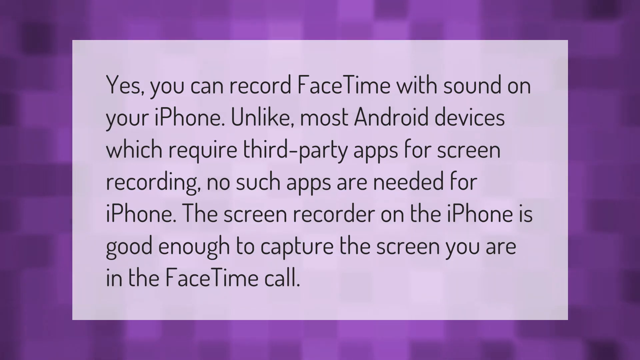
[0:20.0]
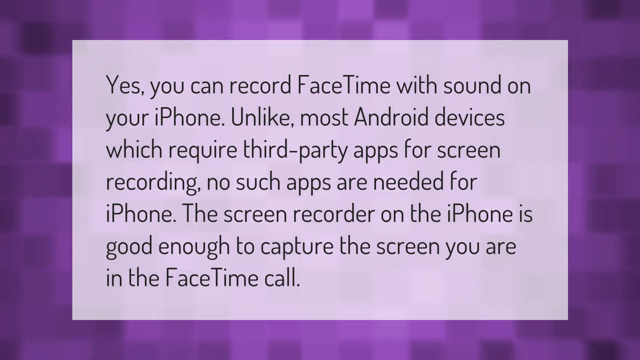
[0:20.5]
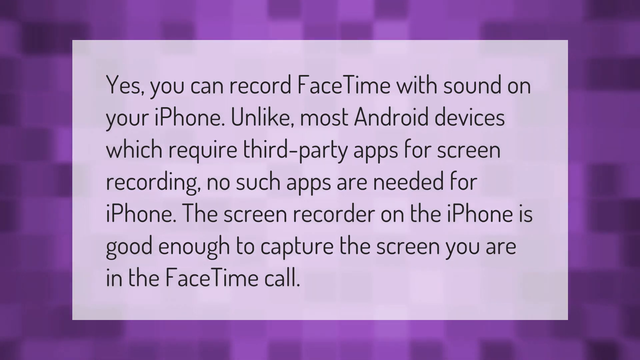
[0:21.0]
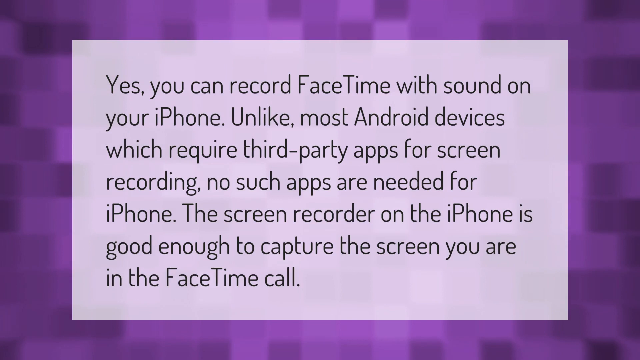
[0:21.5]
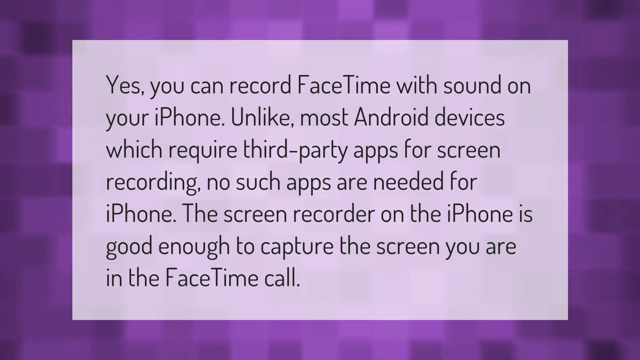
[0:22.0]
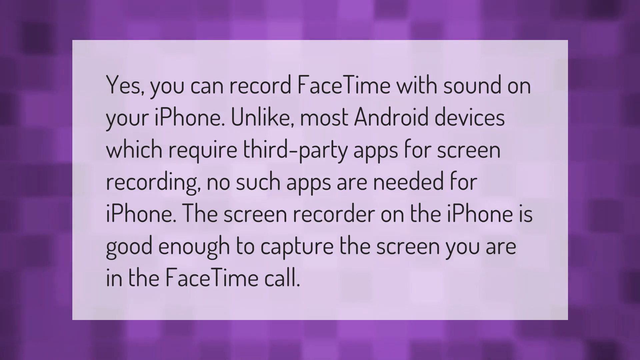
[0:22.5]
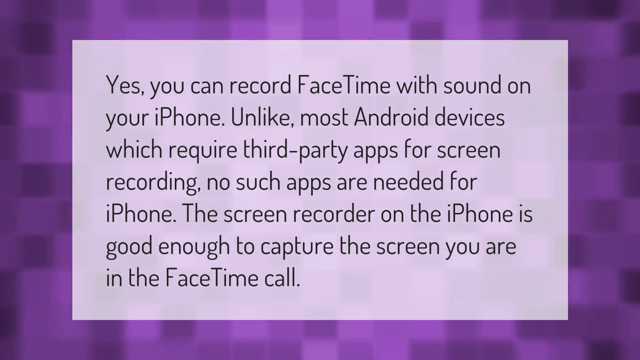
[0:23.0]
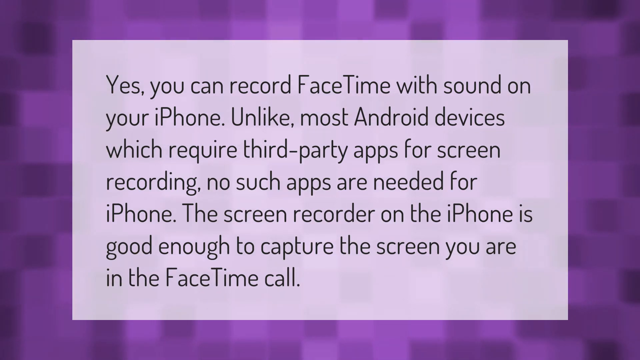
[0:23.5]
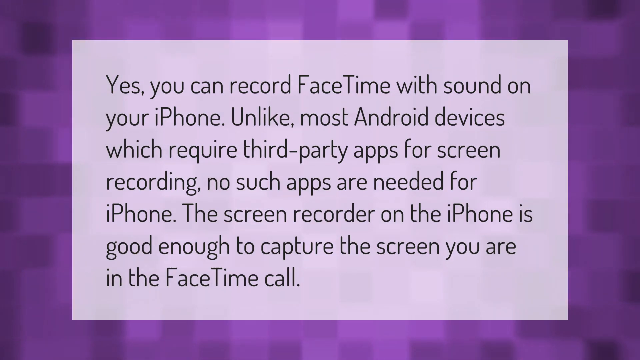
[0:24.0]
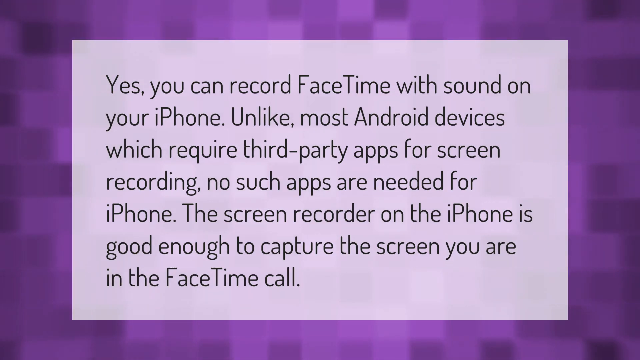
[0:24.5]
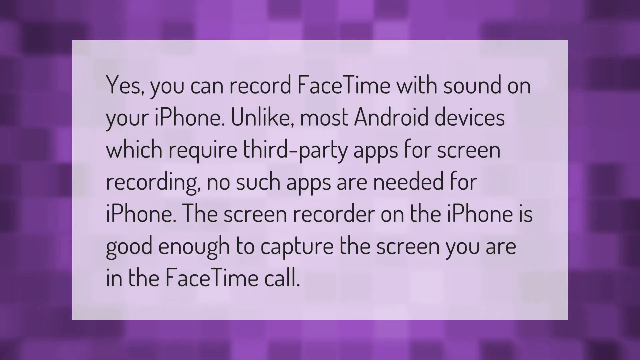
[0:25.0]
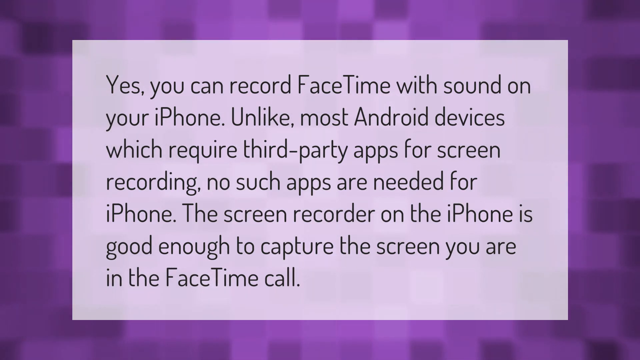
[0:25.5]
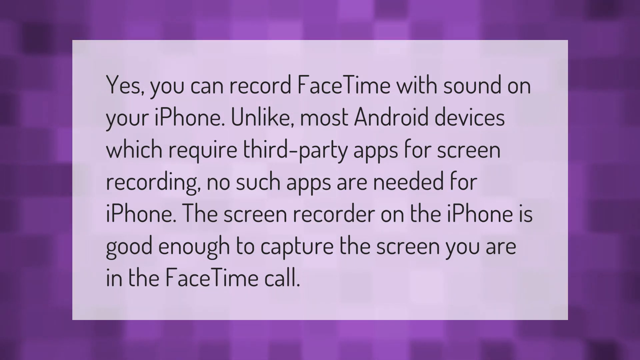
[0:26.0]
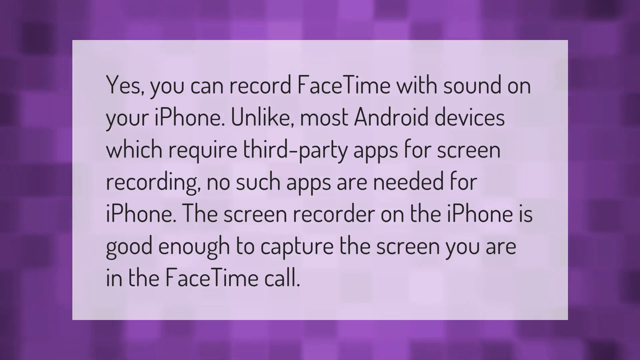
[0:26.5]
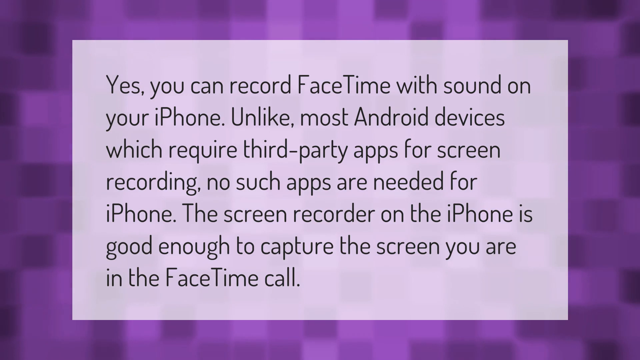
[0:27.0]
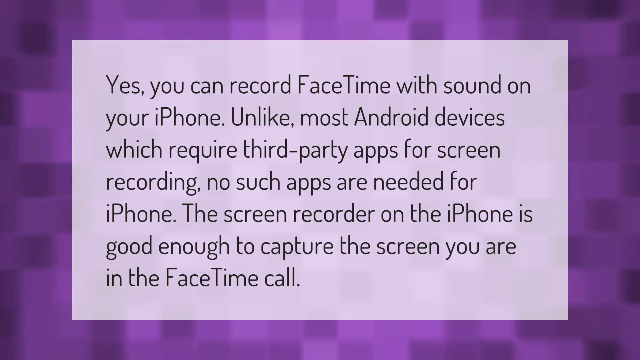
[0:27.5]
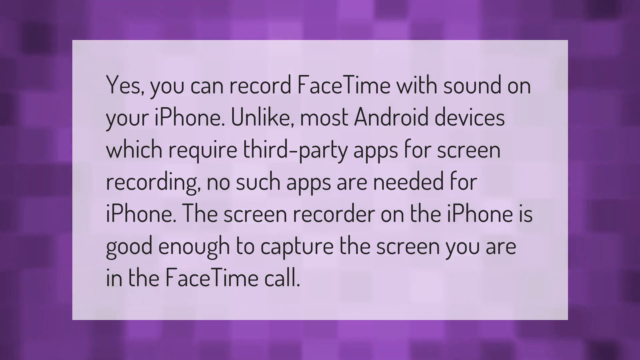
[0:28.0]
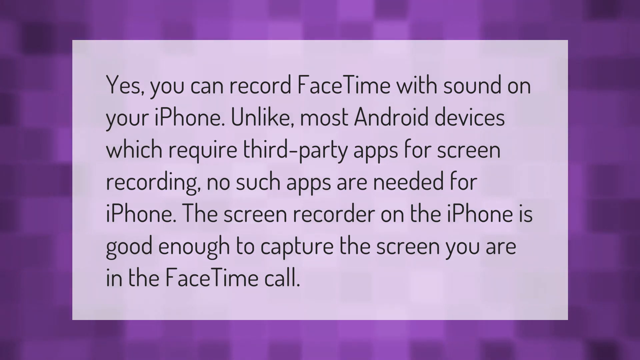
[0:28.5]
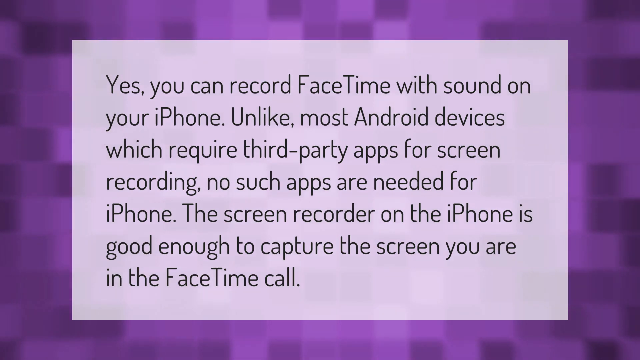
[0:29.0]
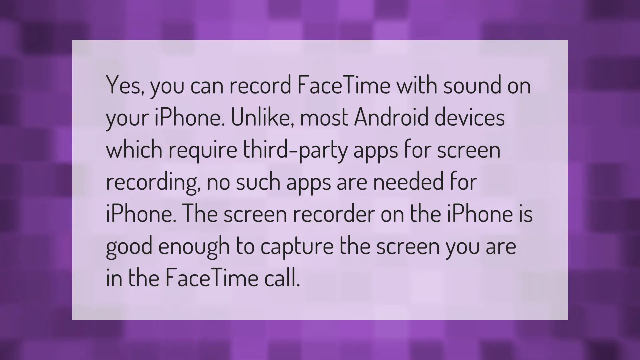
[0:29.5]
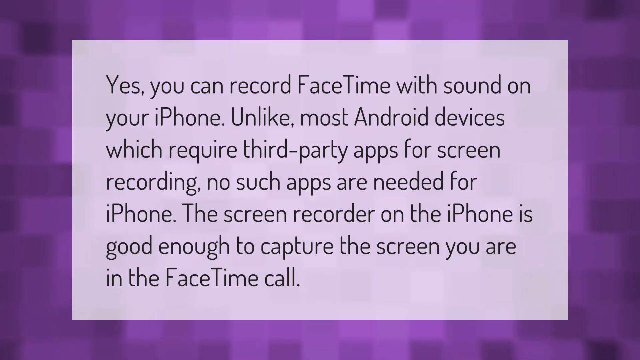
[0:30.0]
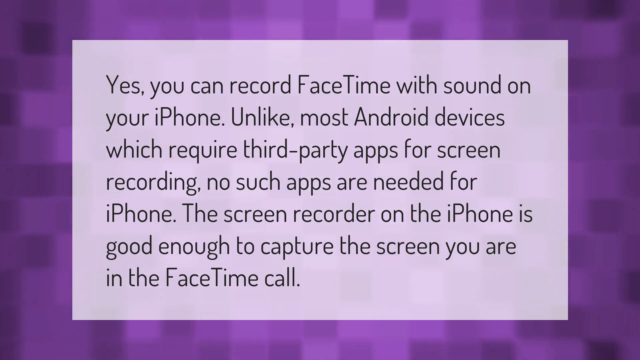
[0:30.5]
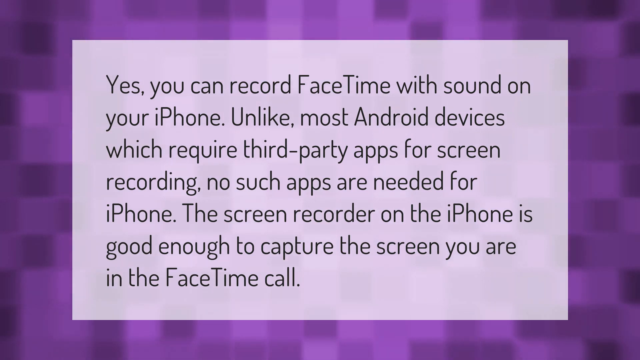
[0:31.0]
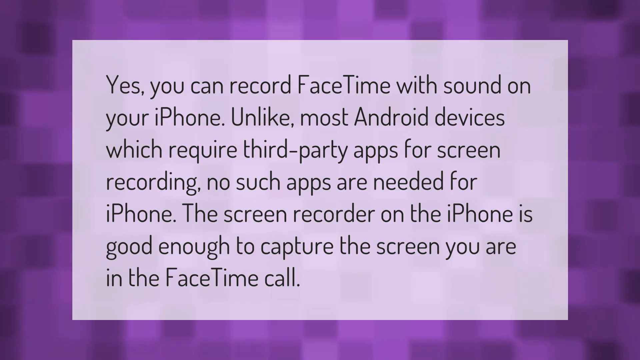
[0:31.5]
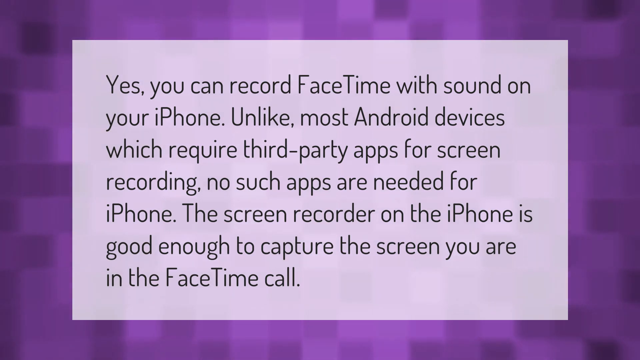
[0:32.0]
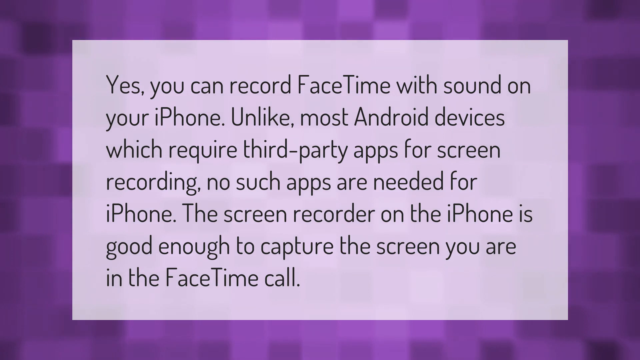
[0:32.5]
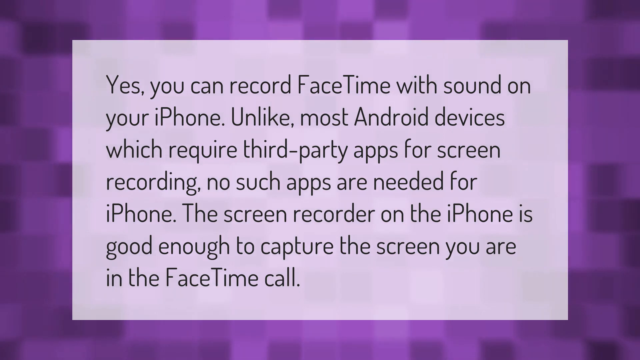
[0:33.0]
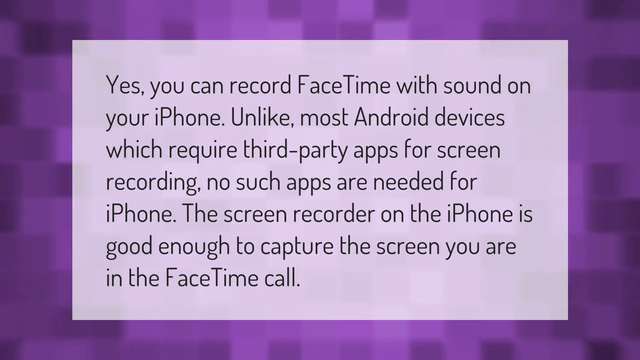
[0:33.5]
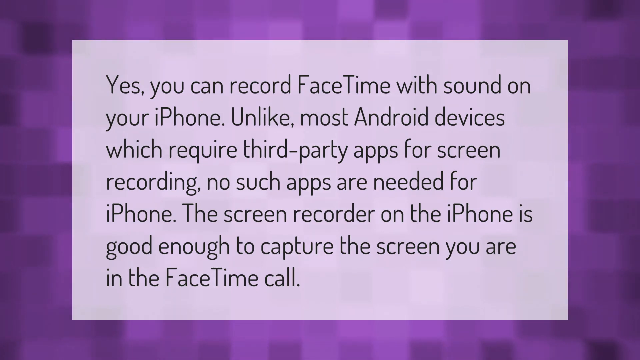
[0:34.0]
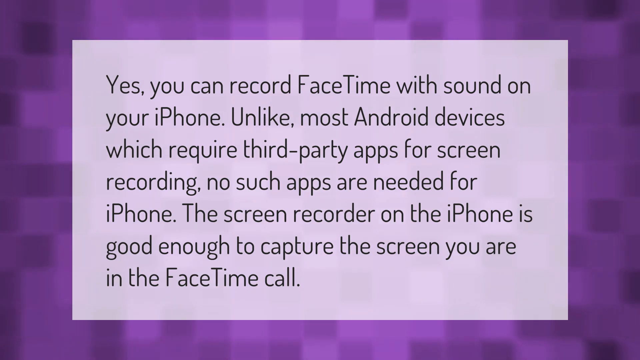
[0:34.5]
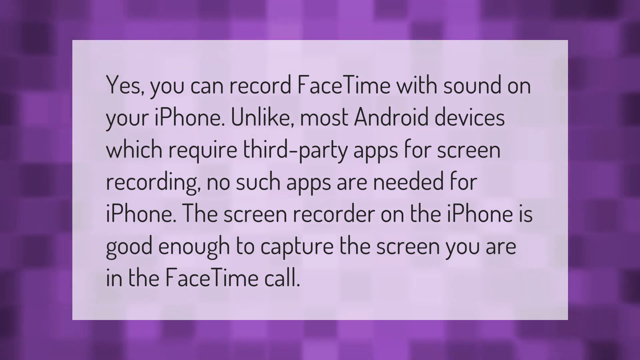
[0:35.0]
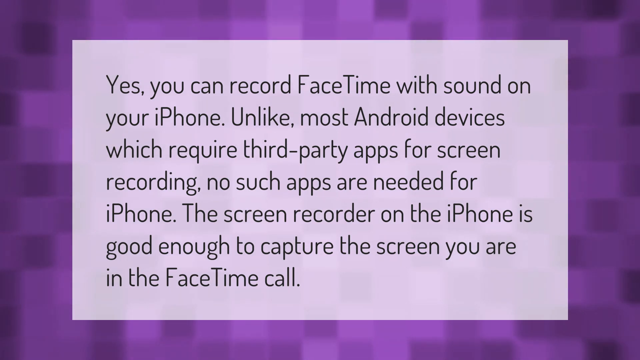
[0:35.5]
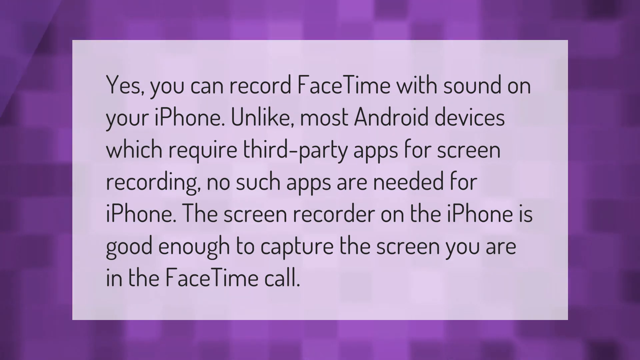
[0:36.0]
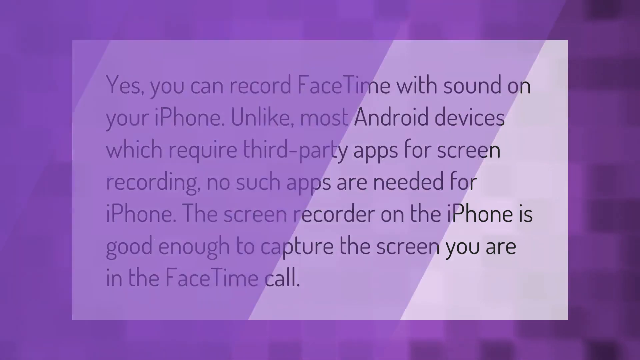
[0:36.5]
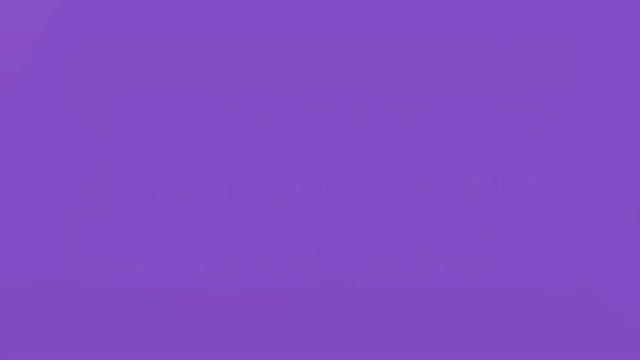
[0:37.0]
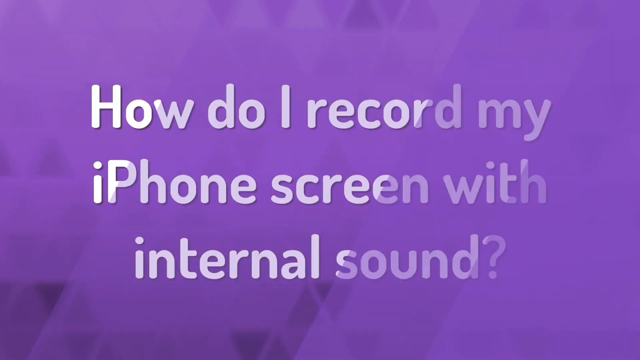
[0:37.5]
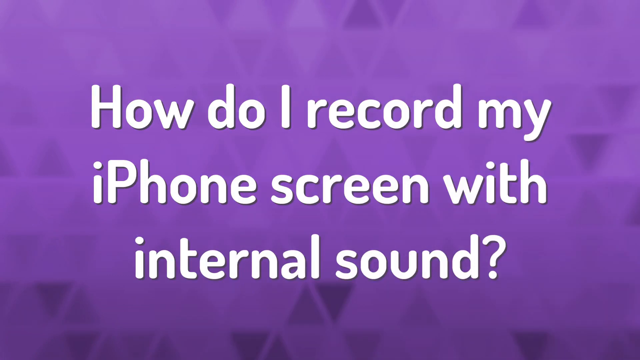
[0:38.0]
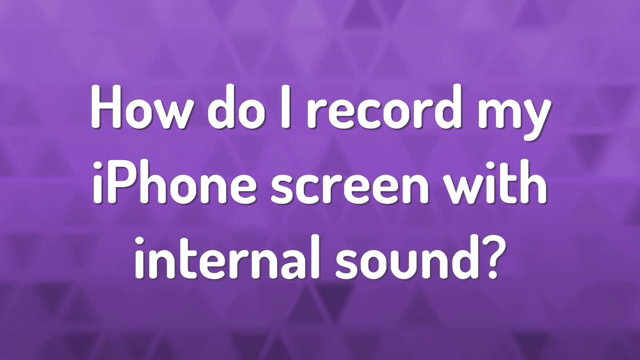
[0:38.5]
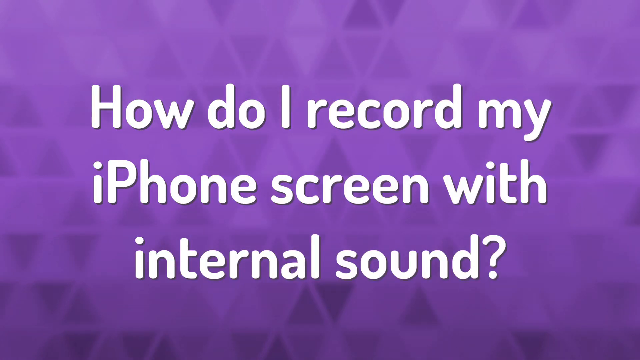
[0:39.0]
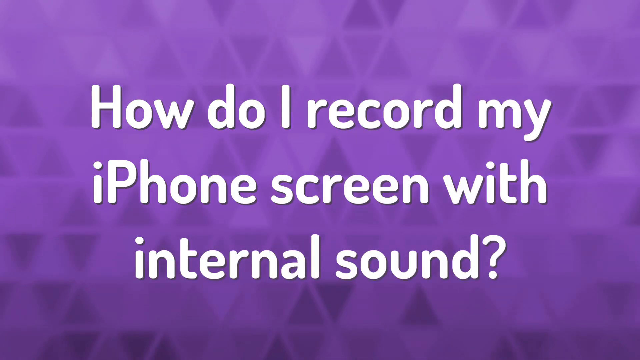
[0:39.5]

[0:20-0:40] A pixelated background in various shades of lavender, from light to dark, moves slightly. Over it is a lighter lavender box with black text reading "Yes, you can record FaceTime with sound on your iPhone. Unlike most Android devices, which require third-party apps for screen recording, no such apps are needed for iPhone. The screen recorder on the iPhone is good enough to capture the screen you are in the FaceTime call." The video then transitions to another lavender background with white text: "how do I record my iPhone screen with internal sound?" This time the background pixels are triangles instead of squares. They are also in motion, giving a sort of ghostly or otherworldly look. Some triangles are upright, others face downward, and there are clusters of upward- and downward-facing triangles together.